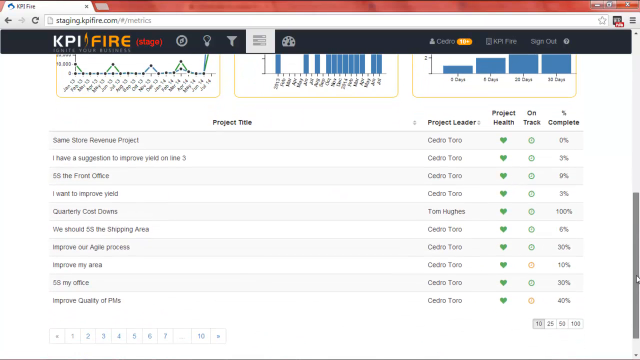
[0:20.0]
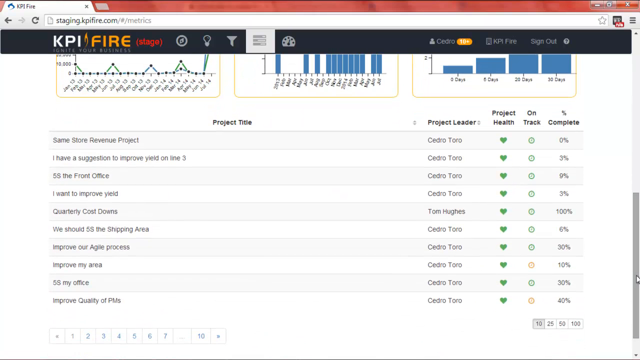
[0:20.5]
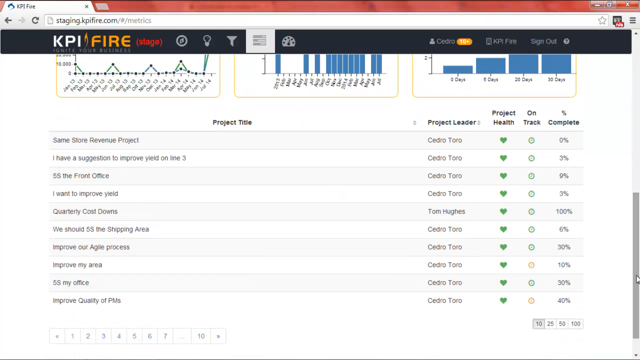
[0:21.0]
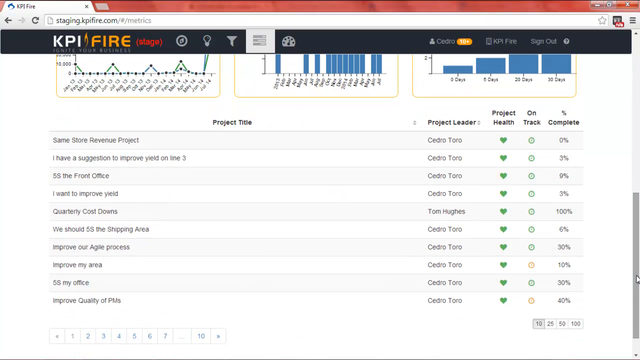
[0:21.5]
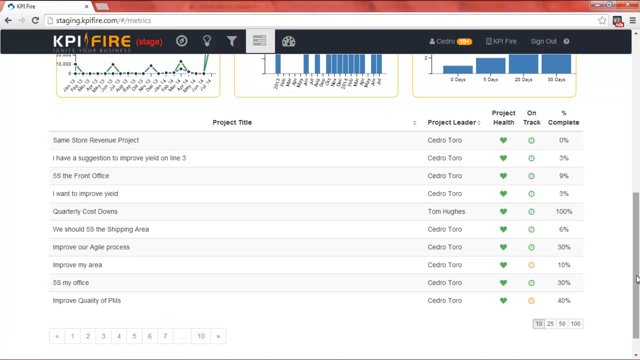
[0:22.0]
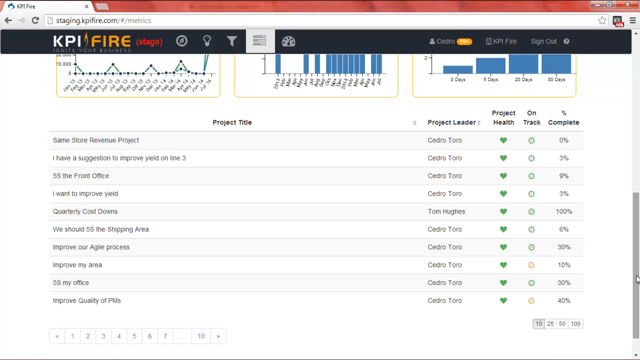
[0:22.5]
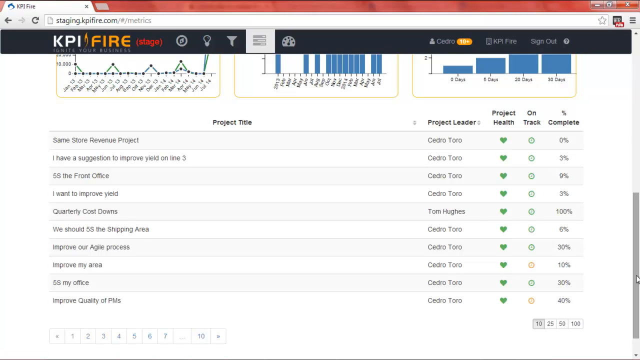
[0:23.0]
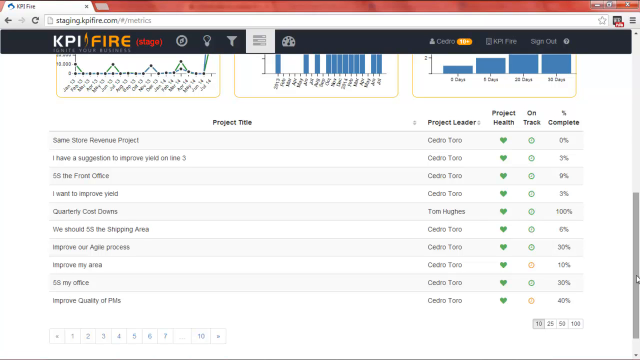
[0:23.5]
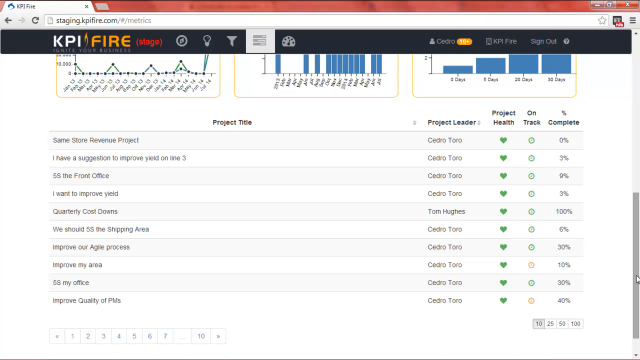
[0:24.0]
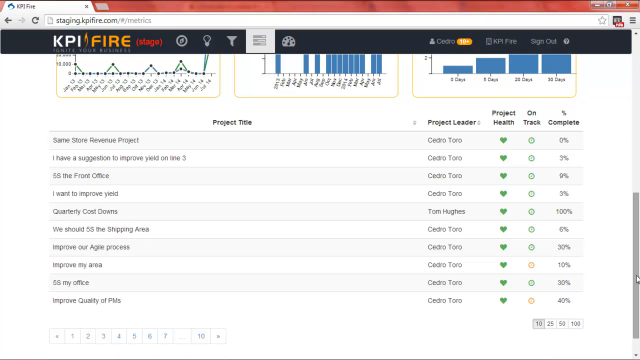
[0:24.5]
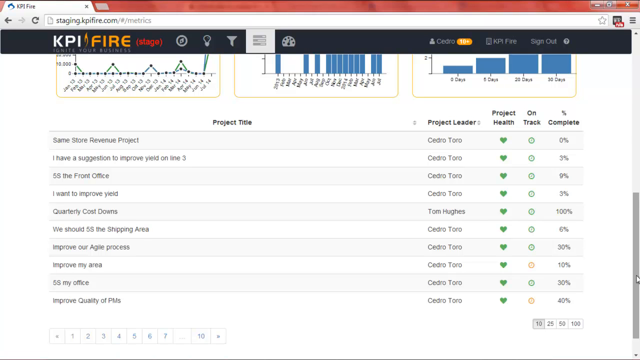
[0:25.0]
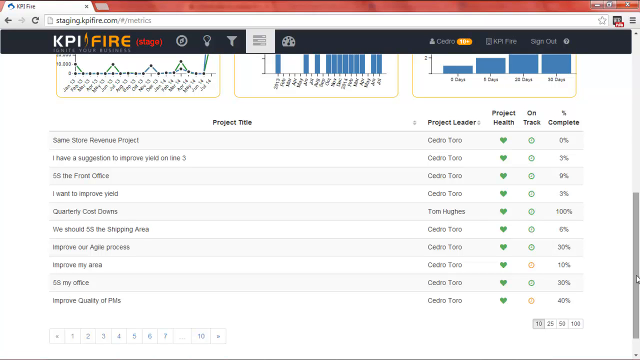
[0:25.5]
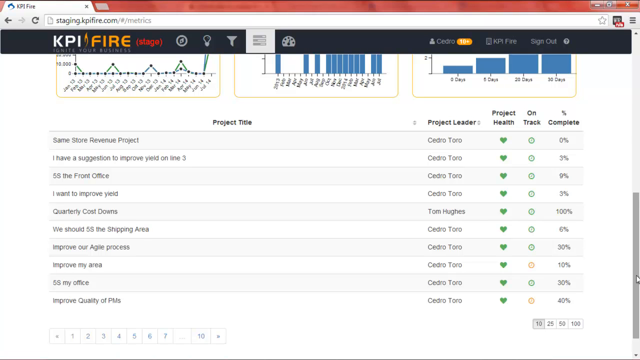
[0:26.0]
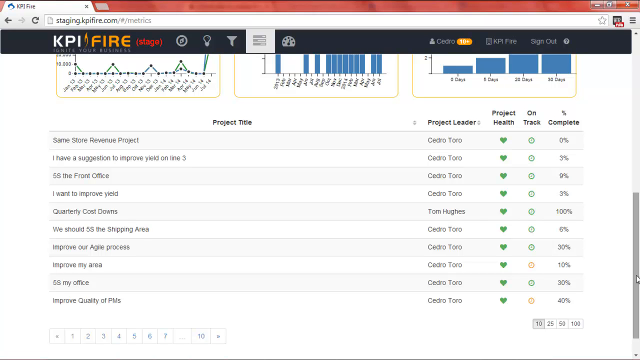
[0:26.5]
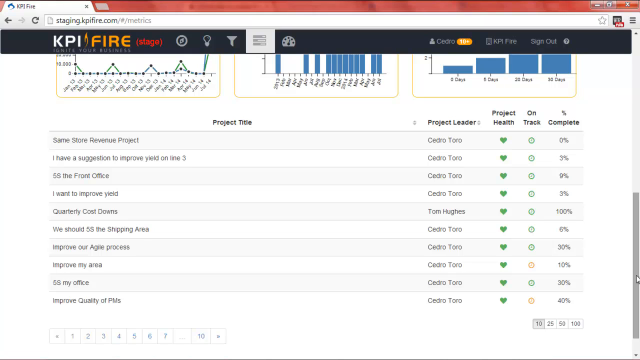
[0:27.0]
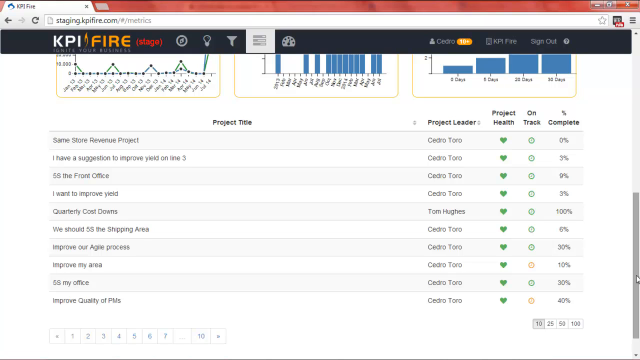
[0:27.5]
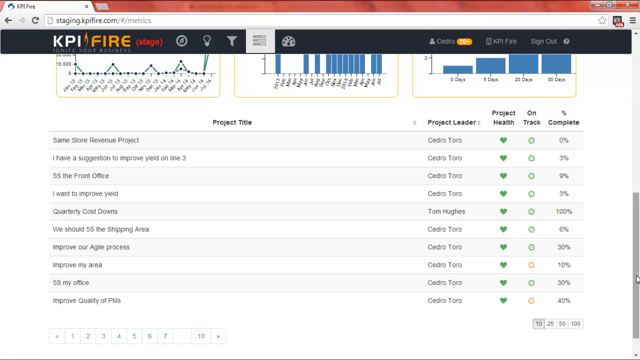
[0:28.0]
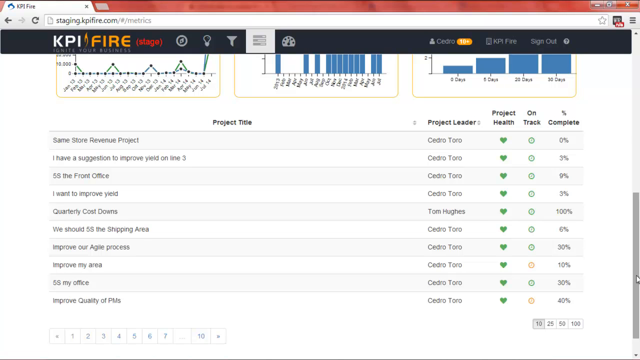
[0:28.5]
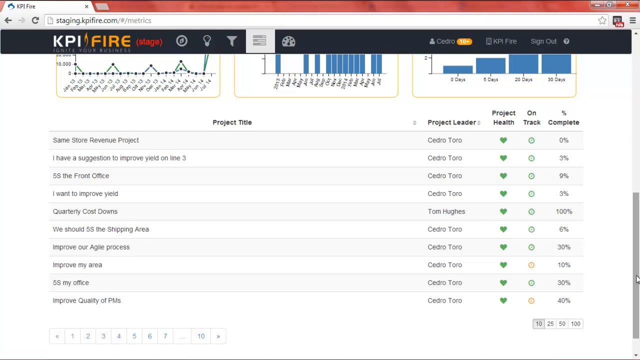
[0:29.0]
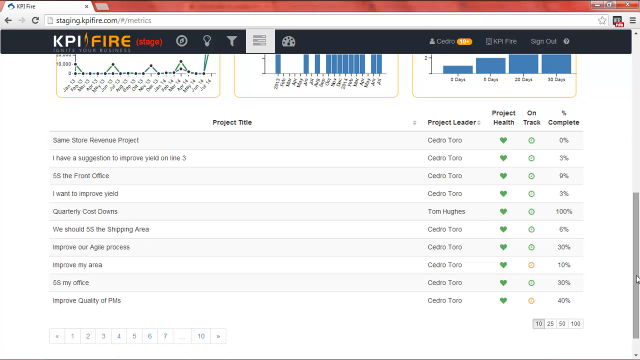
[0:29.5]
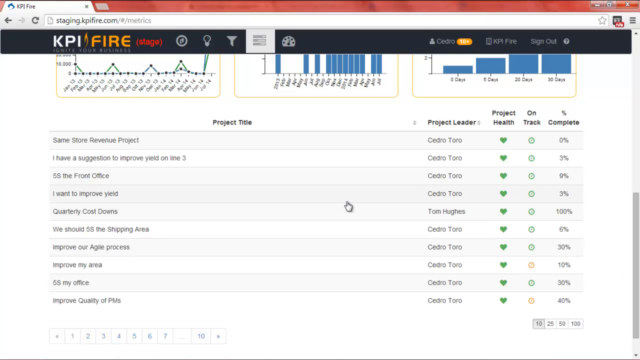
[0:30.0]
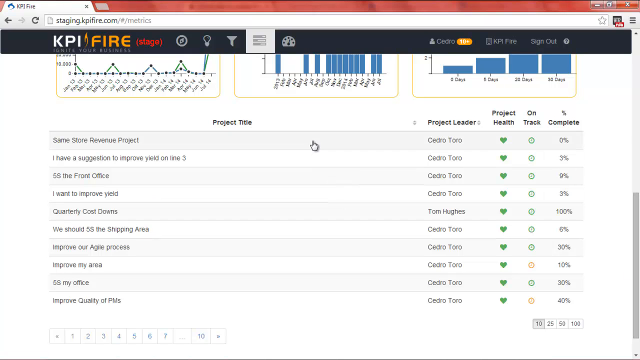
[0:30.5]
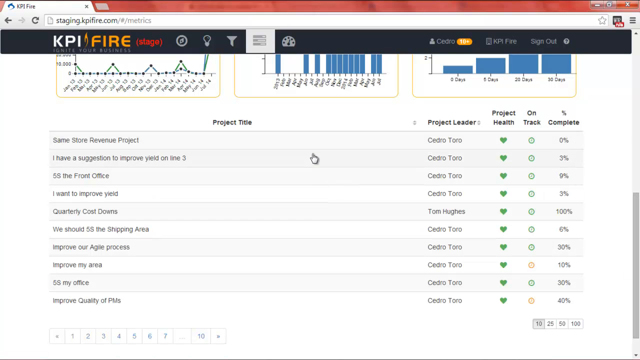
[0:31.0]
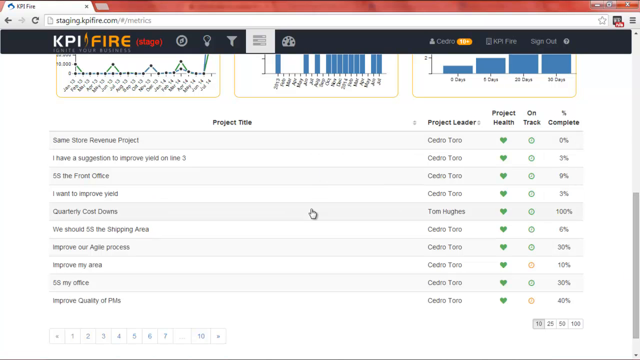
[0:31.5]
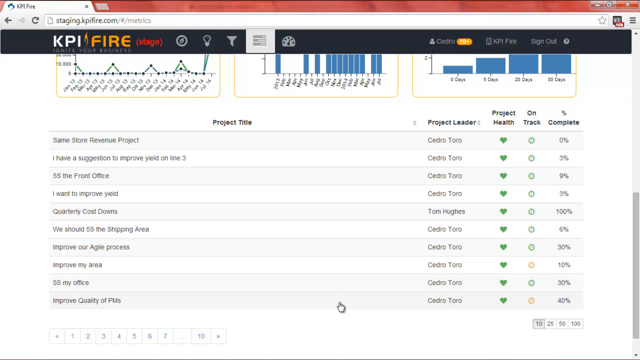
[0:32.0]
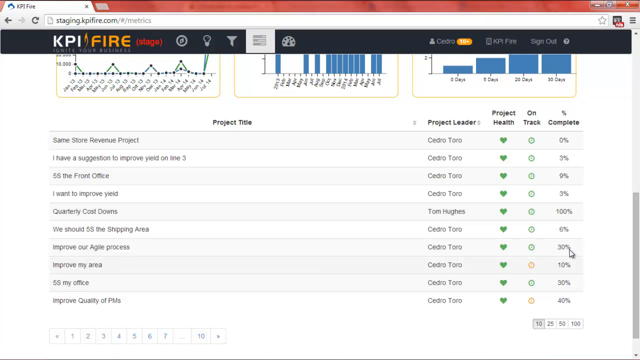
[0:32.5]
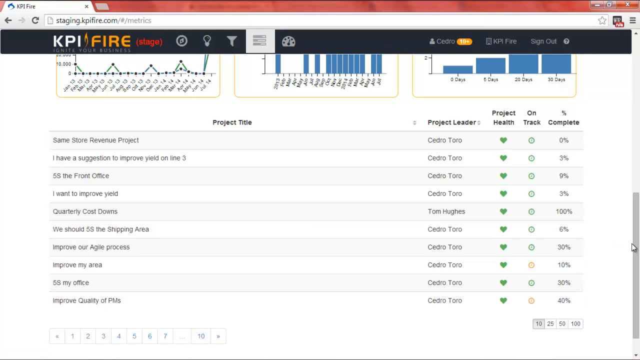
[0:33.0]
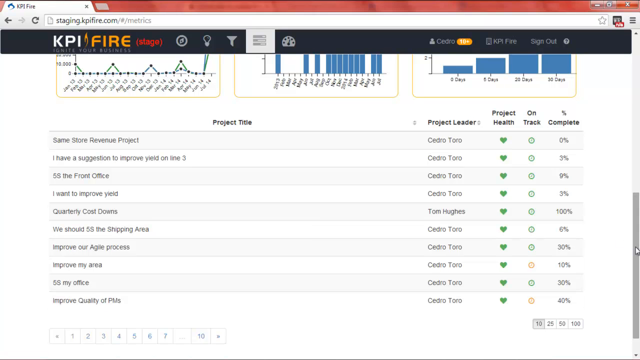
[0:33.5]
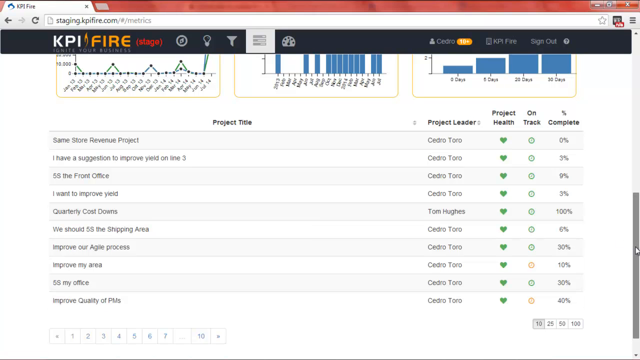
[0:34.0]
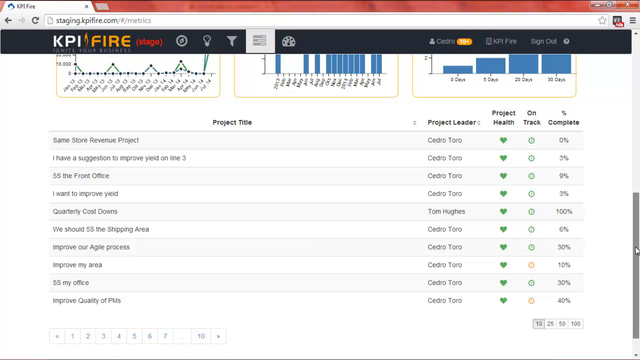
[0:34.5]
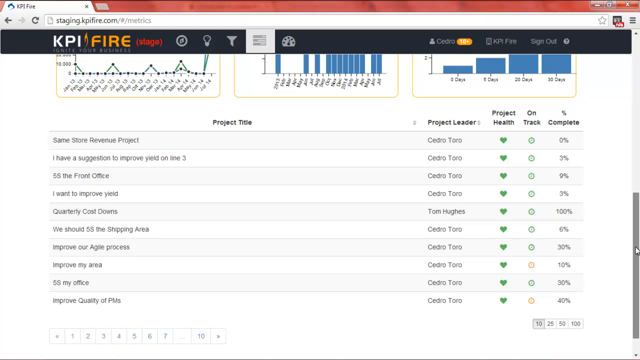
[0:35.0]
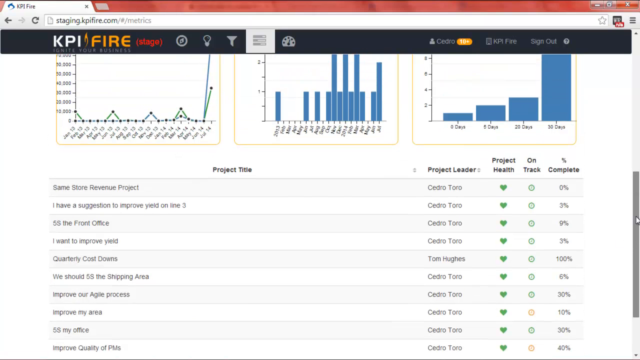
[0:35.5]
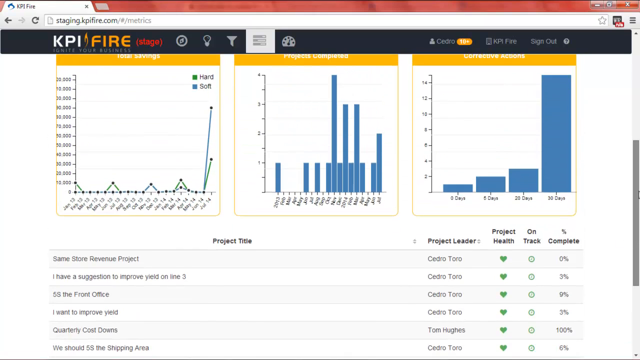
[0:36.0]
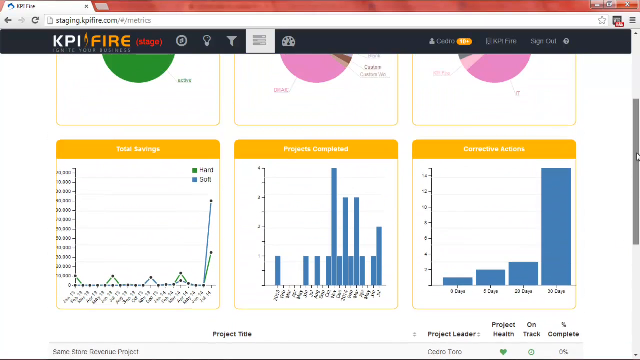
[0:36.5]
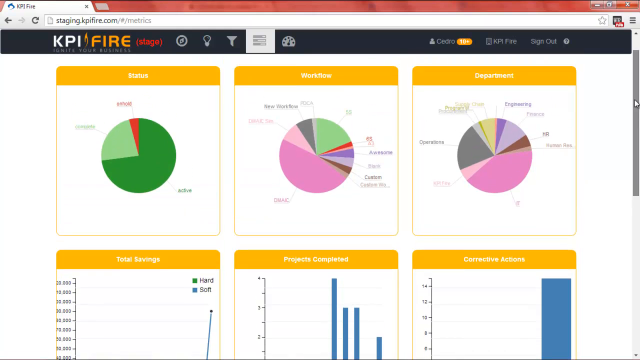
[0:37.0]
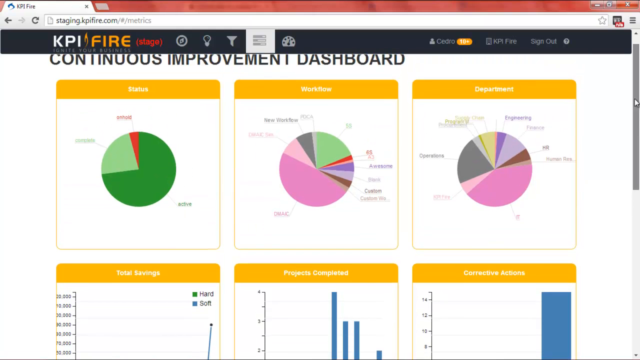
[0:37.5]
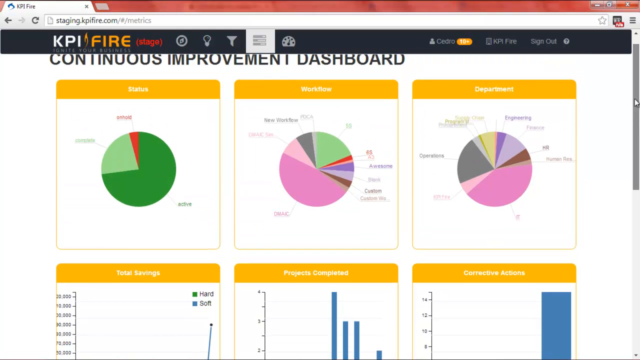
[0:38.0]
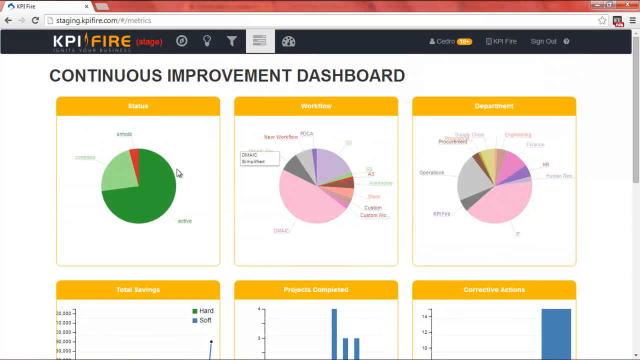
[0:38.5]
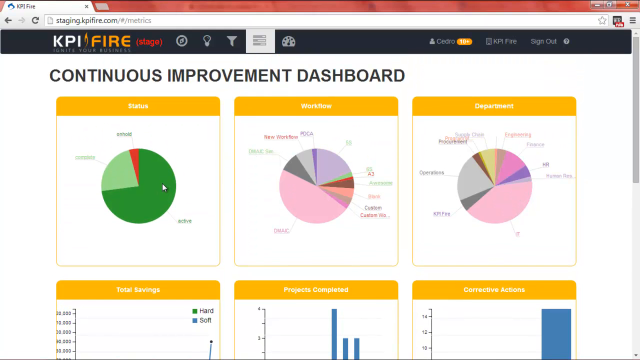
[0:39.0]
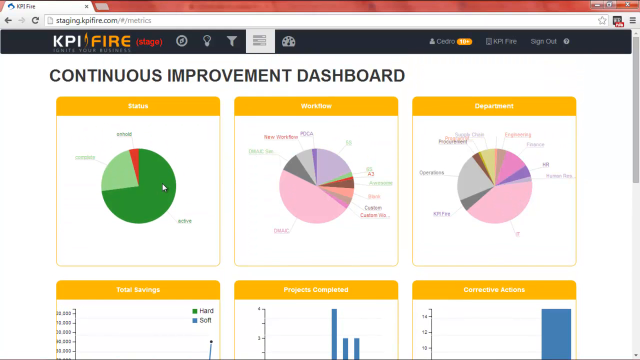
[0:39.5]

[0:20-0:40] The bottom portion of the page shows the project titles, listing each project's leader, its health, whether it is on track, and its percentage completed. Halfway through, the mouse cursor comes on screen and hovers over some of the project titles. The user slowly moves the cursor to the scroll bar on the right side and drags it up, bringing the graphs and pie charts back into view and reaching the top of the page, where all six informative images are visible: the three pie charts and the three graphs, each with its set of information.